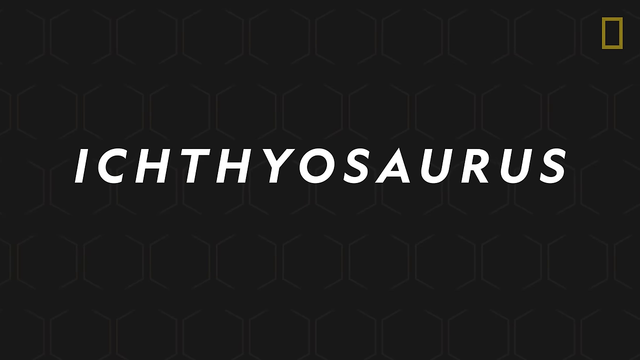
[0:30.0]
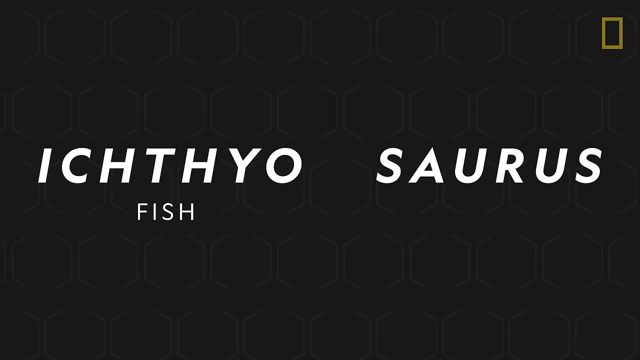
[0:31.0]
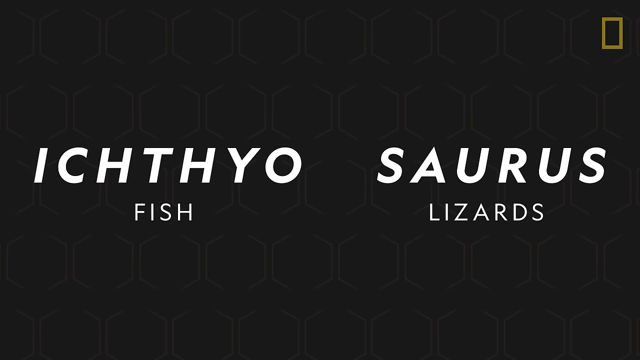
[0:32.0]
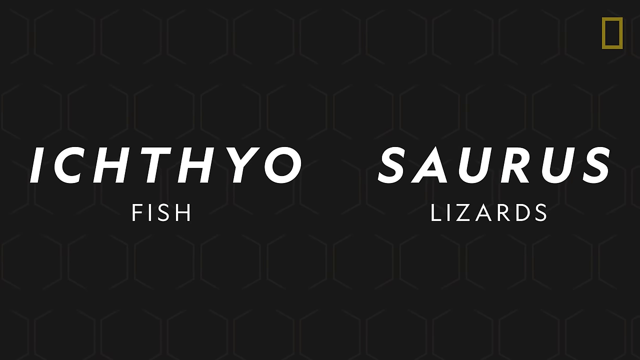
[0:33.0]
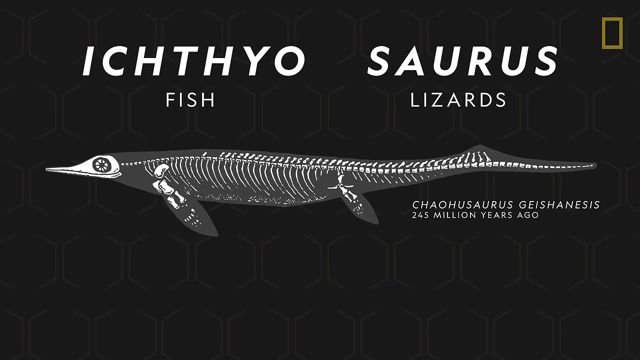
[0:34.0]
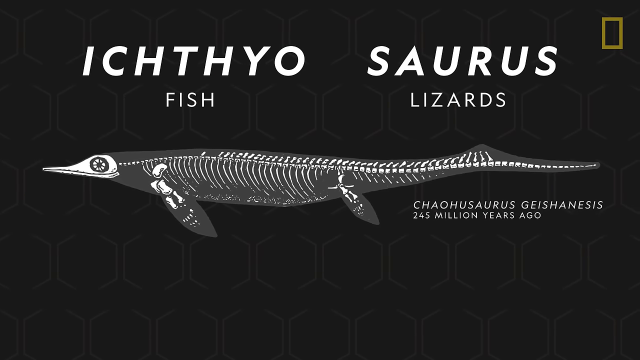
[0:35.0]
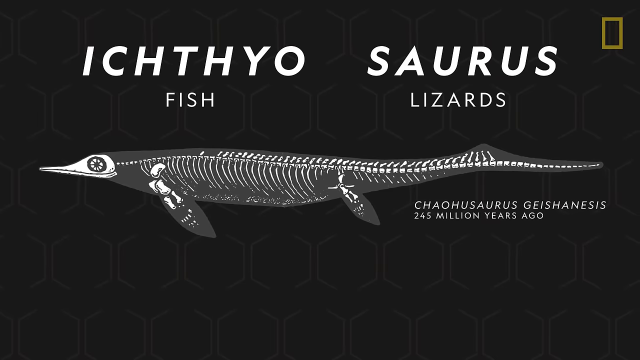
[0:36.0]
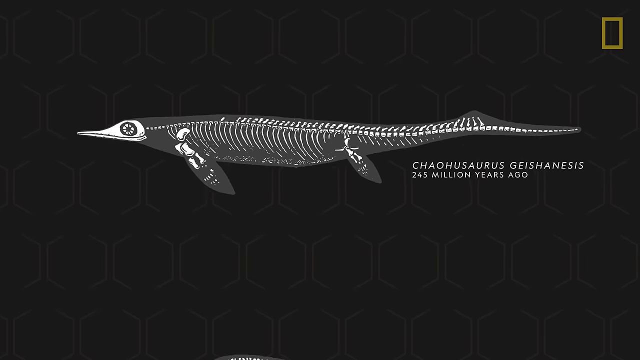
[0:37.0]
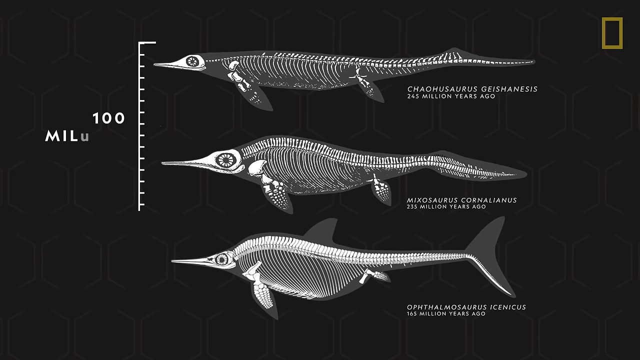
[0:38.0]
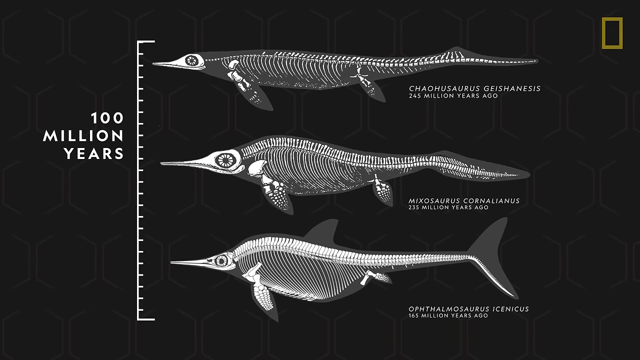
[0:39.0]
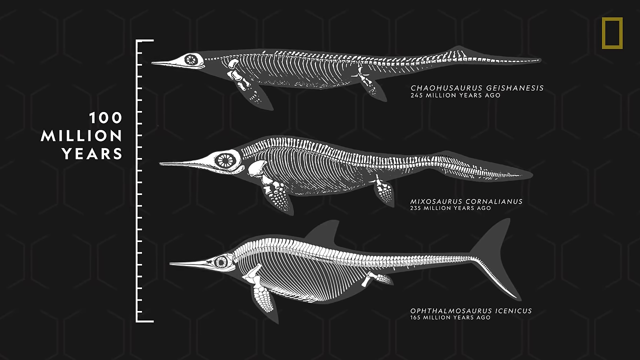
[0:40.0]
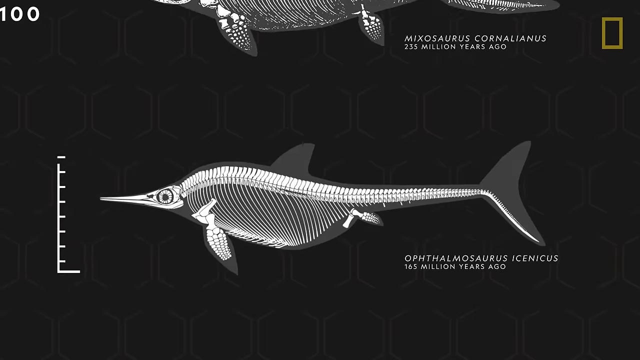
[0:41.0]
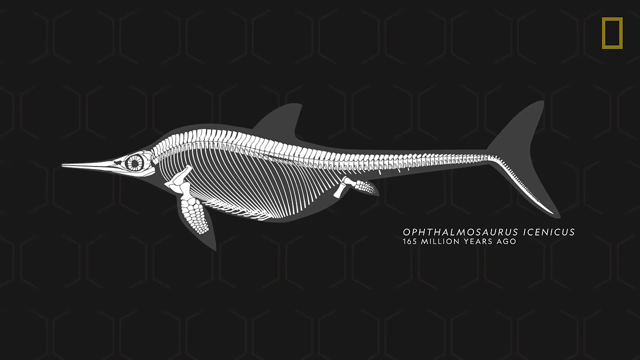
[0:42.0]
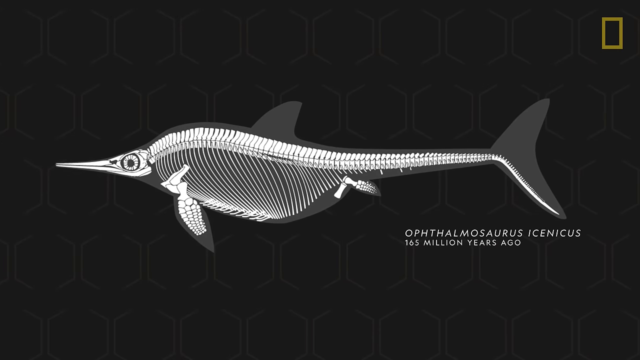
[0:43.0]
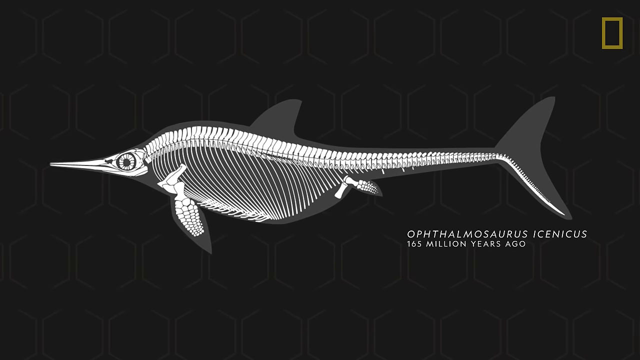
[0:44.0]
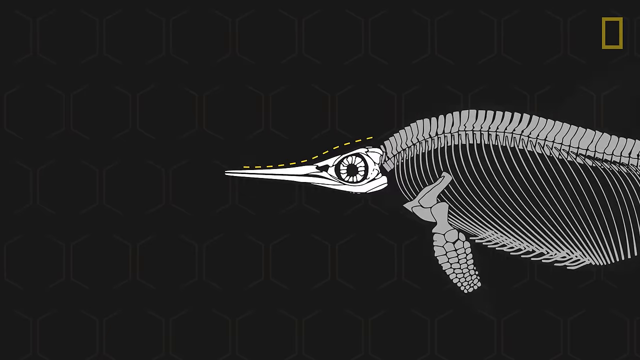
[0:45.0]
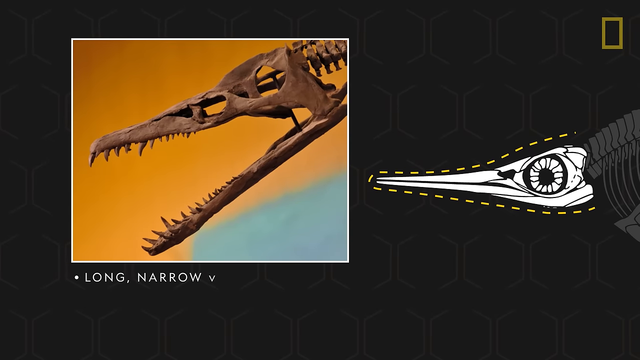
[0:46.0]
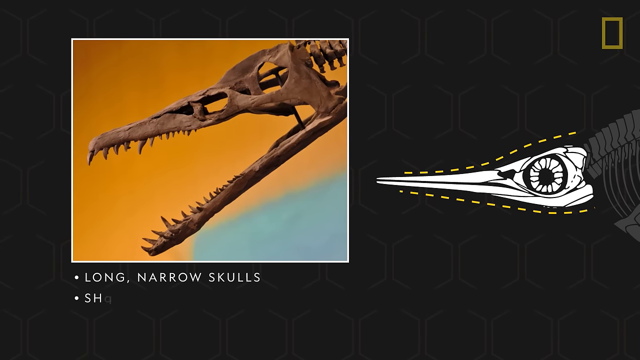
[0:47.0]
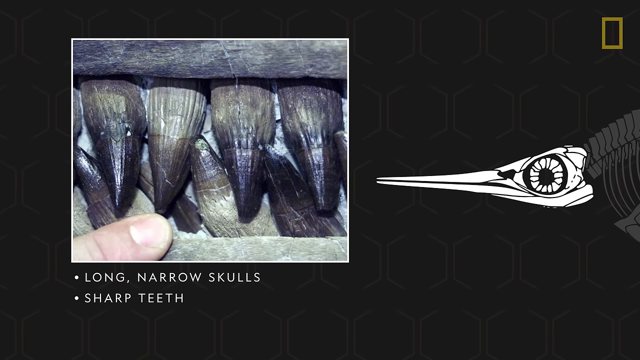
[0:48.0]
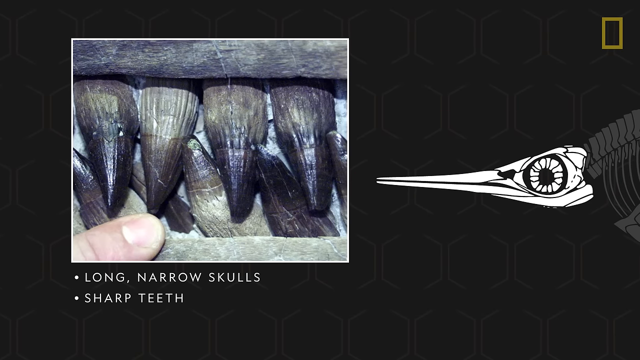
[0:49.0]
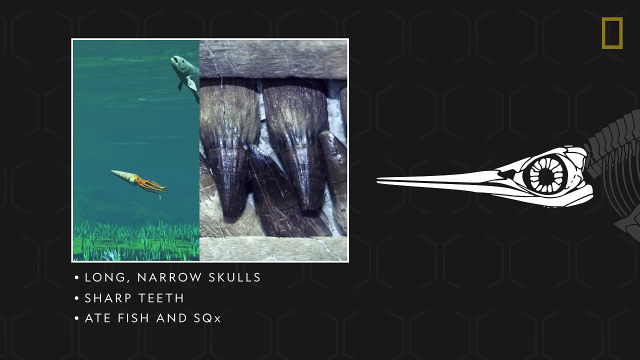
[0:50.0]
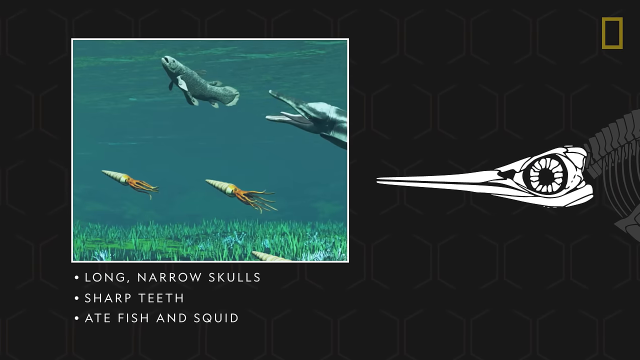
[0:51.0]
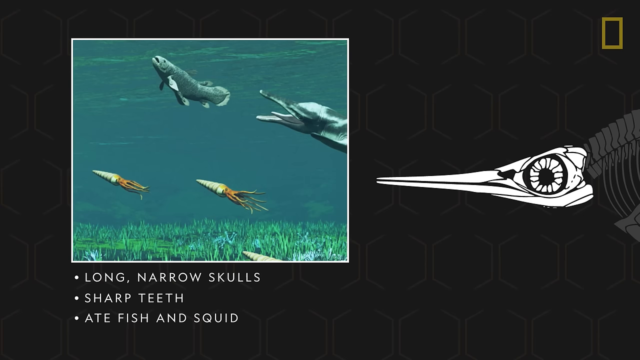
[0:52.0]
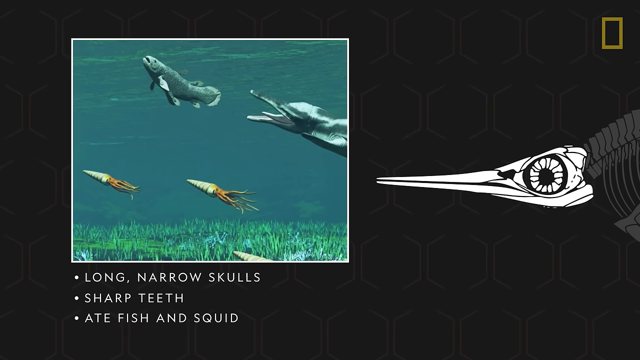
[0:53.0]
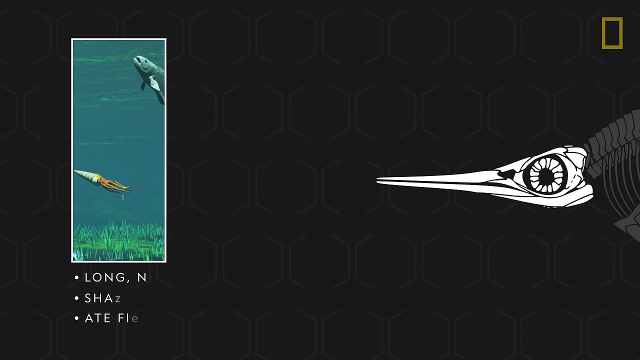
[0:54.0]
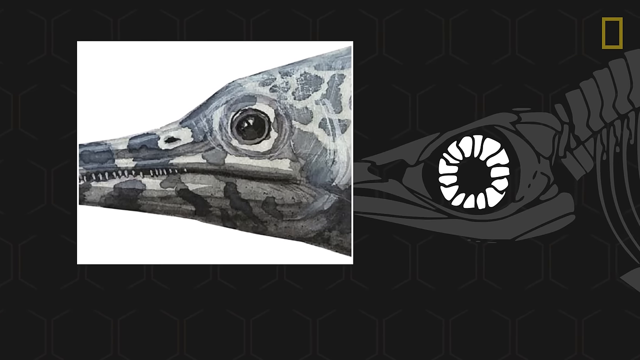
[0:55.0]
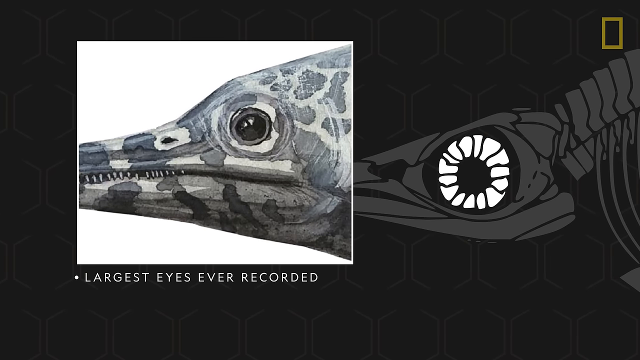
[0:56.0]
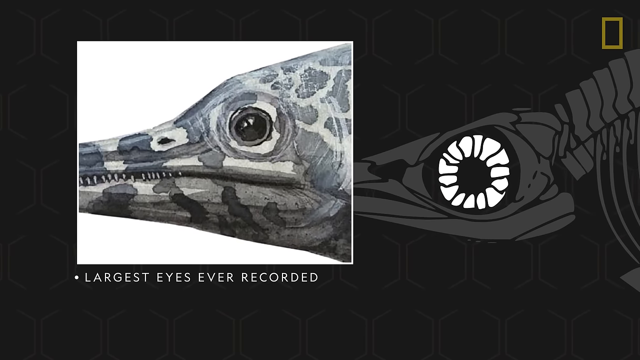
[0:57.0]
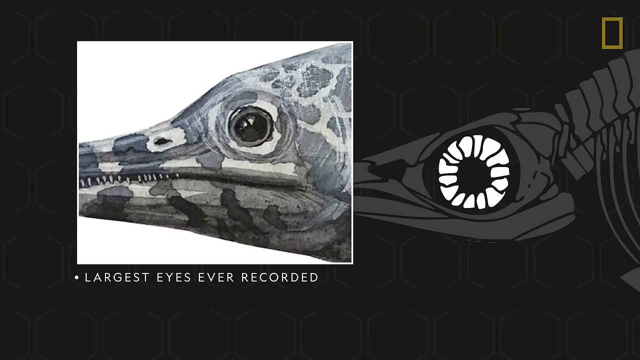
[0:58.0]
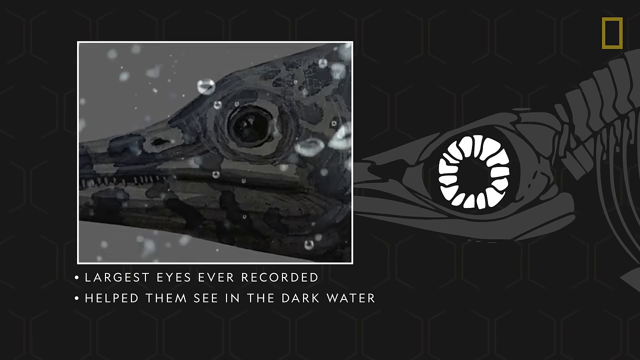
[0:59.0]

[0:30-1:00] On a single black background, a large white word in the center reads "Ichthyosaurus". The "Ichthyo" and "saurus" sections split apart and new labels appear under them explaining what the words mean: "Ichthyo" is labeled "fish" and "saurus" is labeled "lizards". The text zooms upwards, revealing a drawing of an Ichthyosaurus skeleton labeled "Kale-Hosaurus Geishanesis 245 billion years ago"; the fish creature faces left. The top label disappears and the fish dinosaur shrinks, revealing two other creatures: the middle one is labeled "Myxosaurus Cornelianus 233 million years ago" and the bottom one "Ophthalmosaurus Isanicus 165 million years ago". On the left is a large ruler labeling 100 million years, apparently indicating about 100 million years between the topmost and bottom-most fish creatures. The view zooms in on the Ophthalmosaurus Isanicus, showing the skeleton of a round-bodied creature with a beak-like mouth.